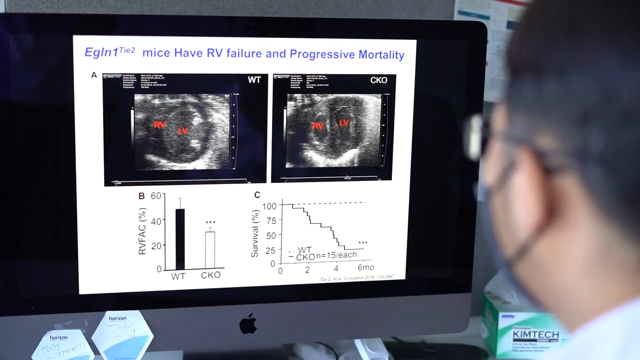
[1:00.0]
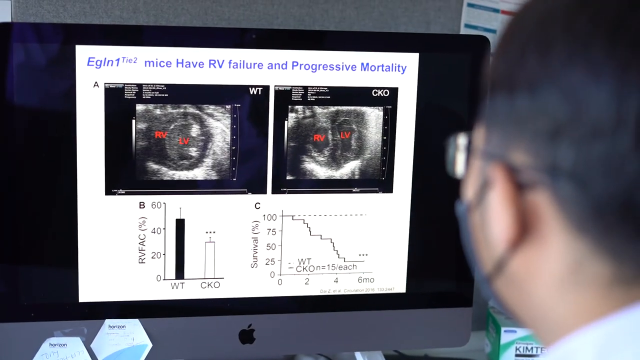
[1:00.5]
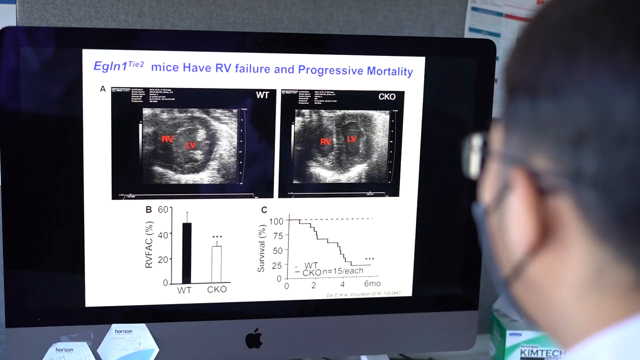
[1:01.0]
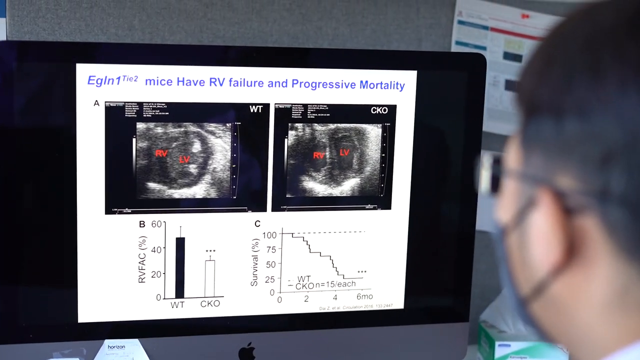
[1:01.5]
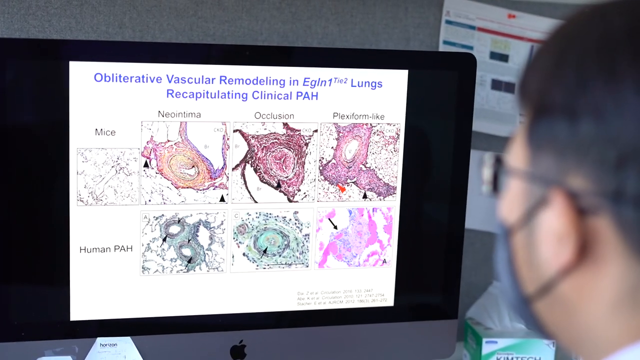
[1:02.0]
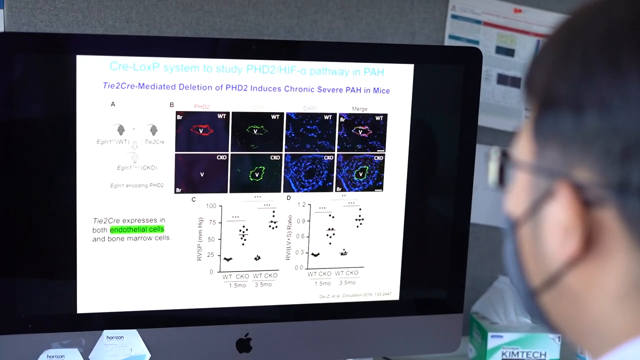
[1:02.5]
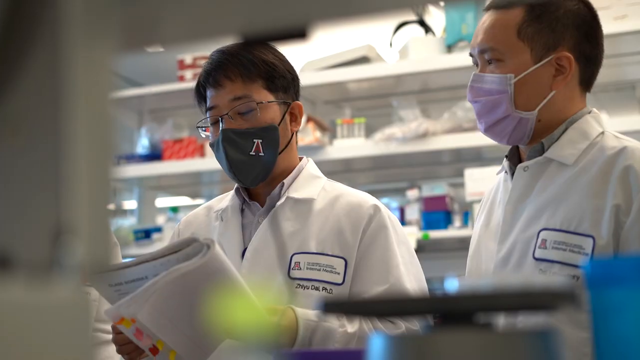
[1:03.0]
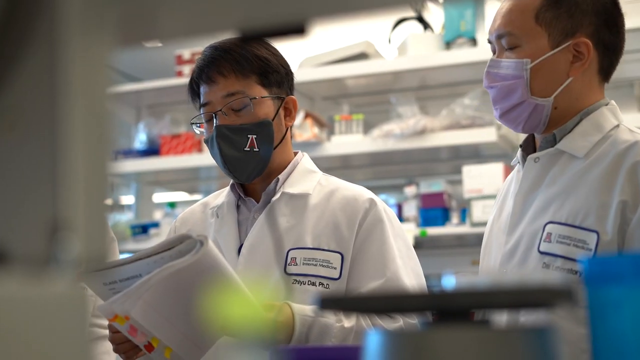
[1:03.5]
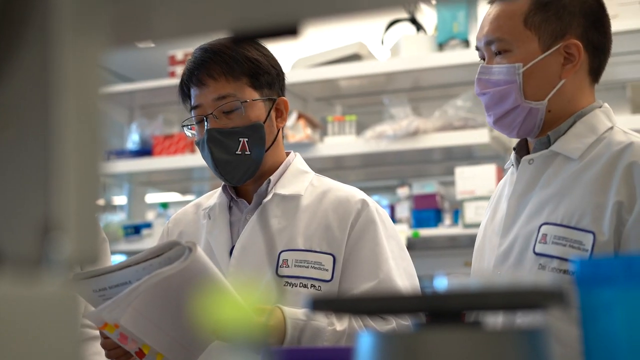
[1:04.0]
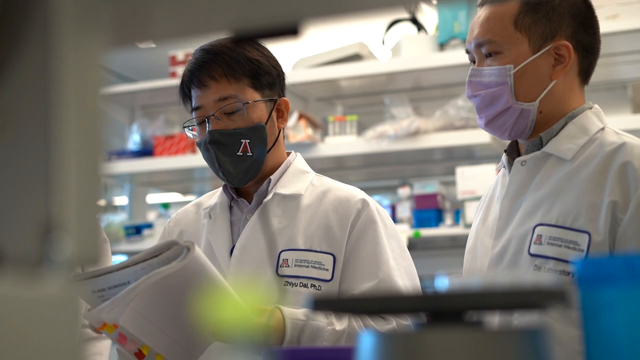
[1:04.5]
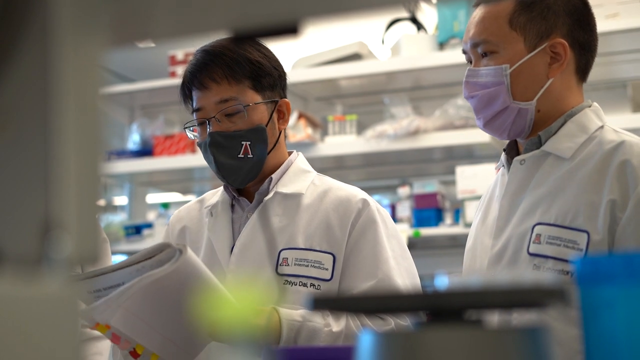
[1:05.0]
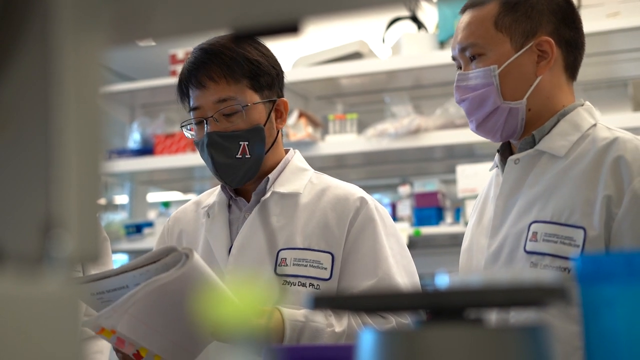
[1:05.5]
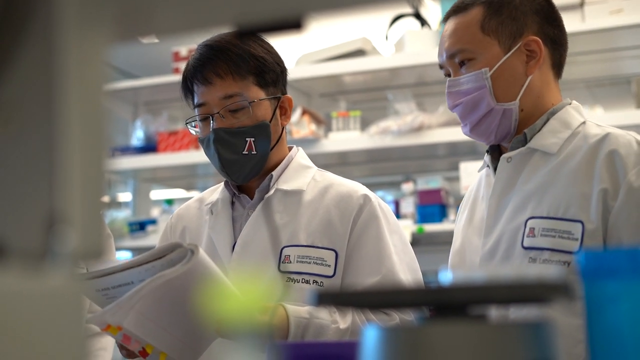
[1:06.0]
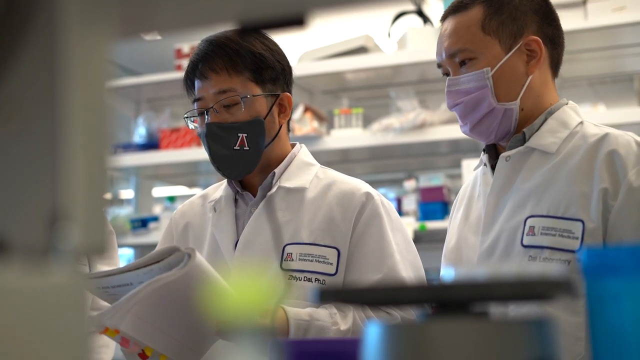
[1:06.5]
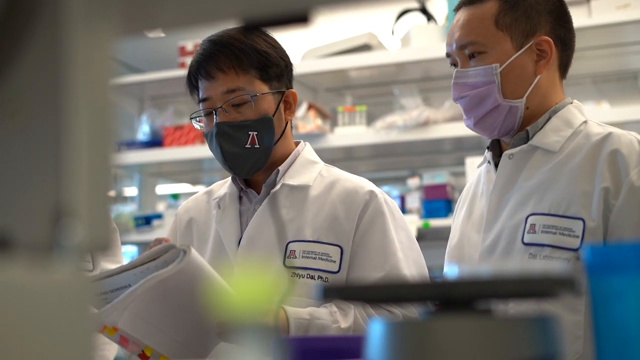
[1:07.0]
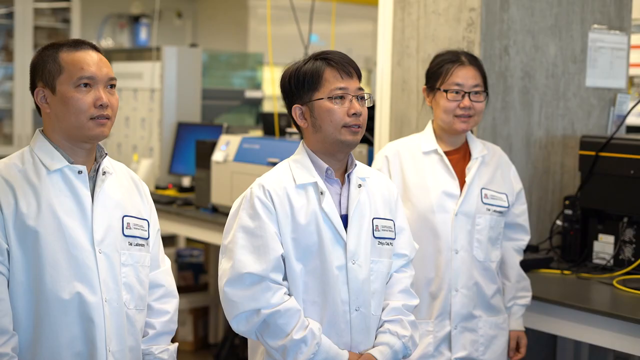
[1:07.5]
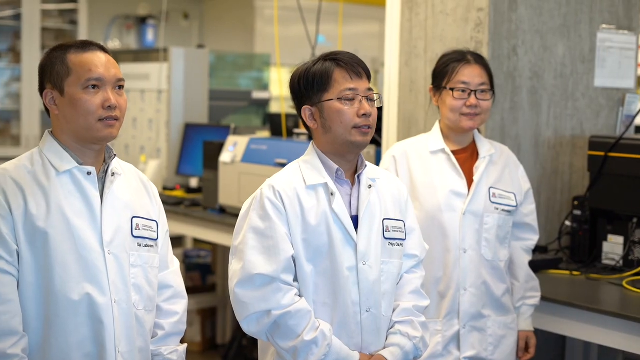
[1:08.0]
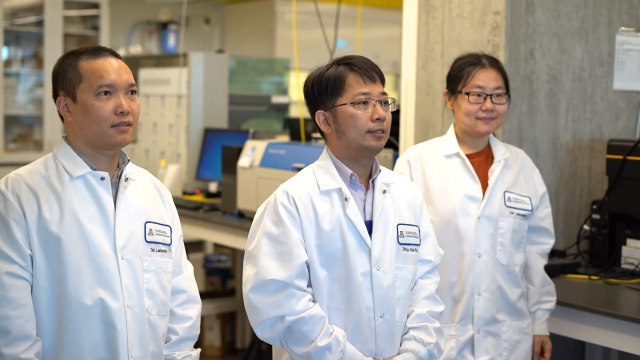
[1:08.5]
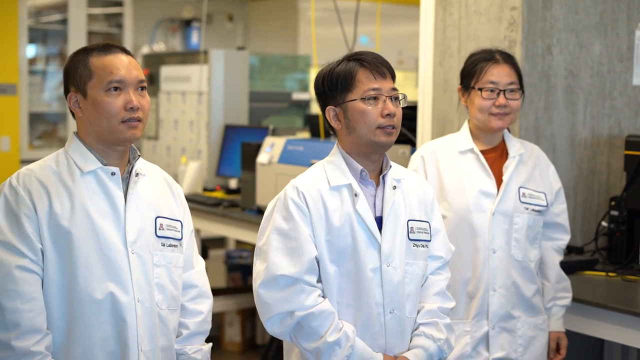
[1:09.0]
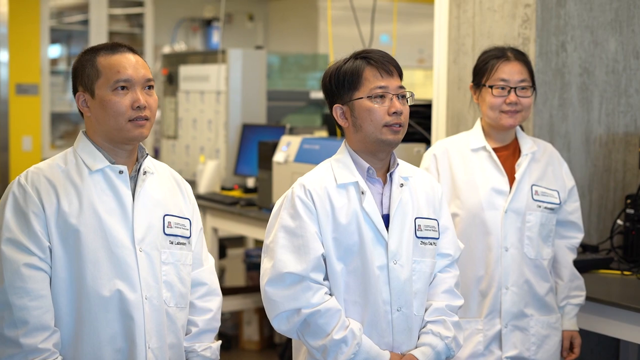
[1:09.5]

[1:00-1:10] A researcher looks at a computer monitor showing two images, a bar graph and a line graph. The text on the screen reads "EGLN1-TI2, mice have RV failure and progressive mortality". Two other screens follow in quick succession. Next, two researchers evaluate information in an open notebook. The man on the left holds the notebook; he wears a face mask with the letter A, a white lab coat and black glasses with thin frames. The man to his left, on the right side of the screen, wears a purple face mask and a white lab coat. Behind them are three white shelves with test tubes and various other boxes and containers. Three of the researchers then stand next to each other, all in white lab coats, and appear to be being interviewed.